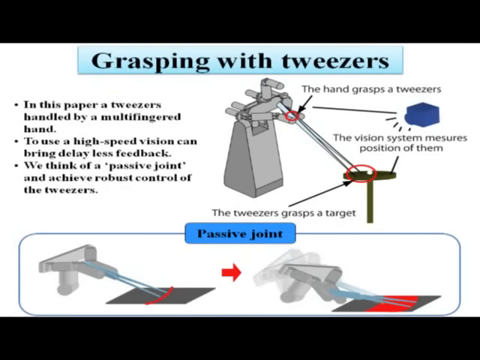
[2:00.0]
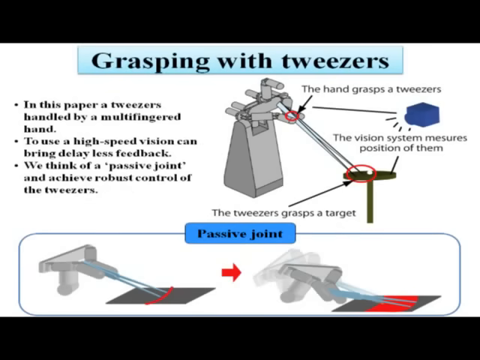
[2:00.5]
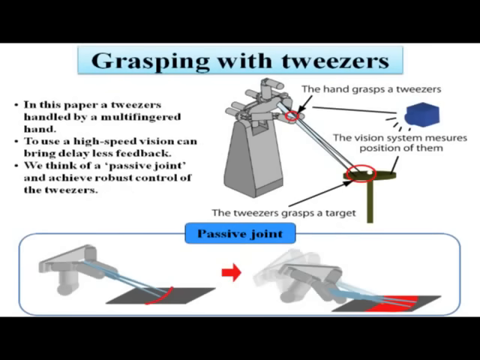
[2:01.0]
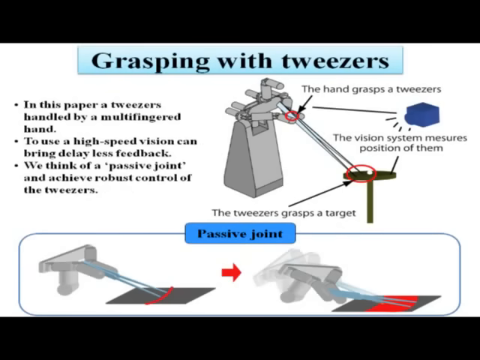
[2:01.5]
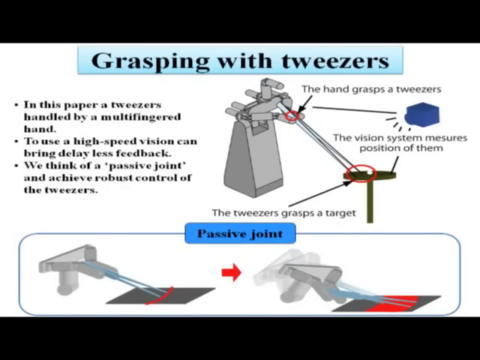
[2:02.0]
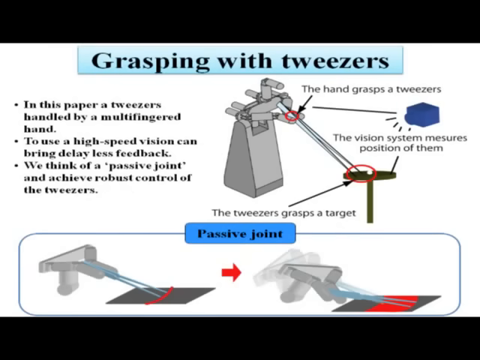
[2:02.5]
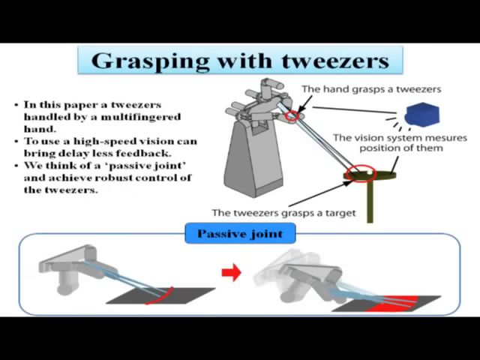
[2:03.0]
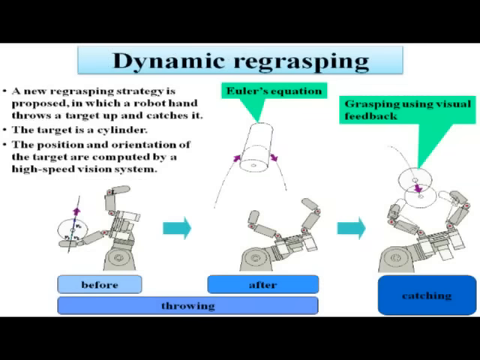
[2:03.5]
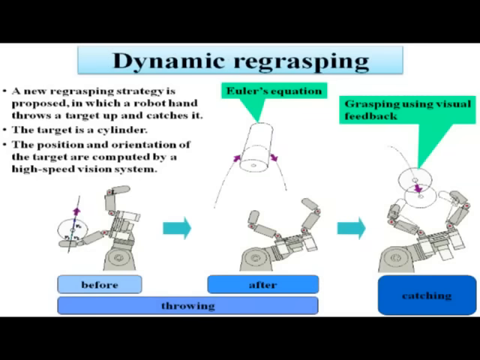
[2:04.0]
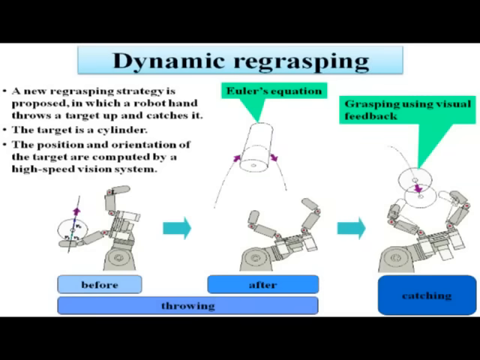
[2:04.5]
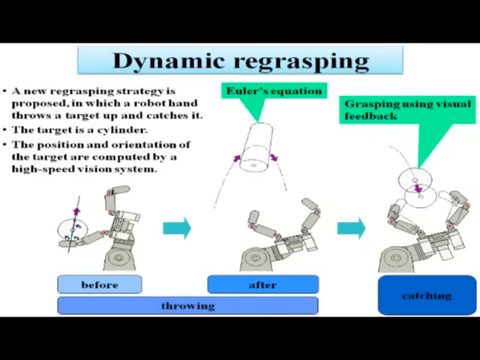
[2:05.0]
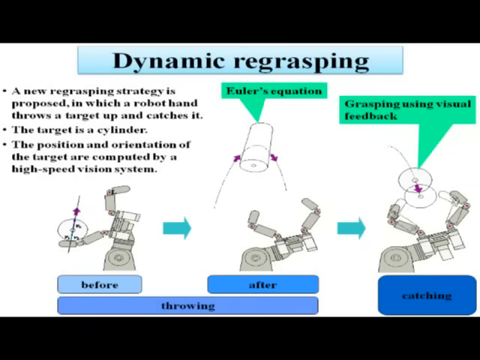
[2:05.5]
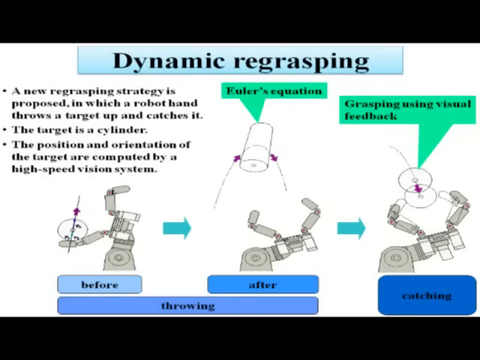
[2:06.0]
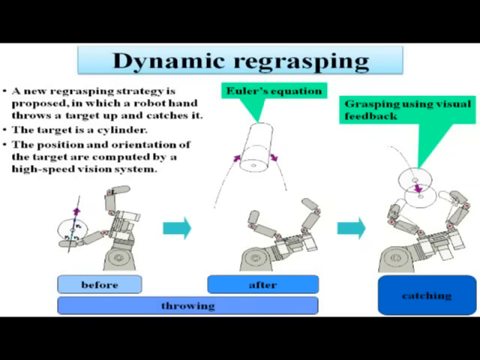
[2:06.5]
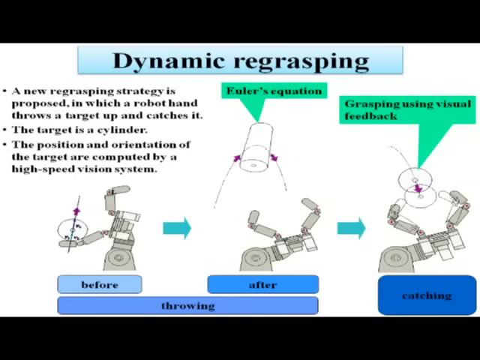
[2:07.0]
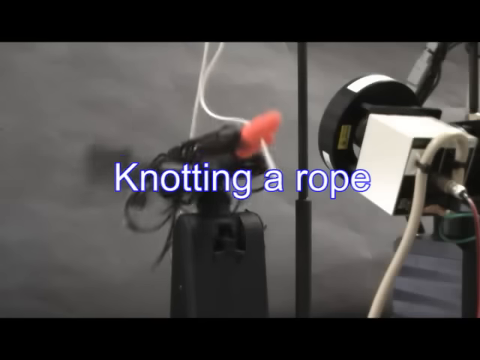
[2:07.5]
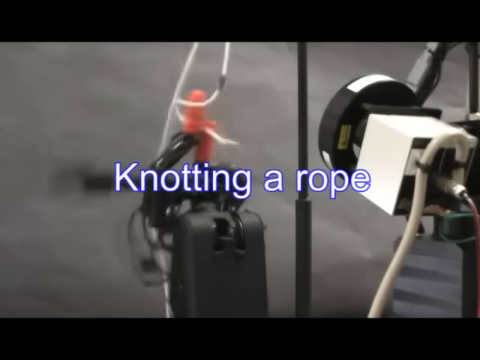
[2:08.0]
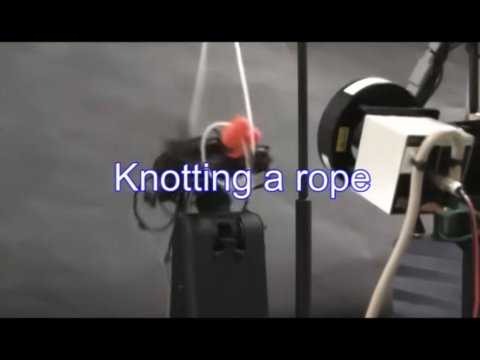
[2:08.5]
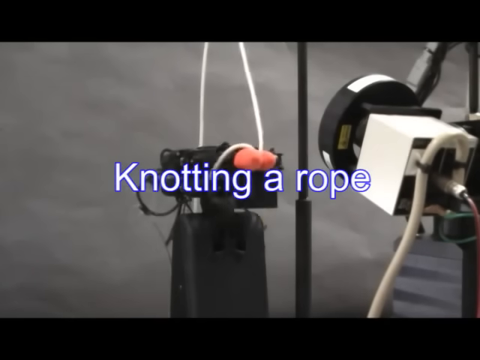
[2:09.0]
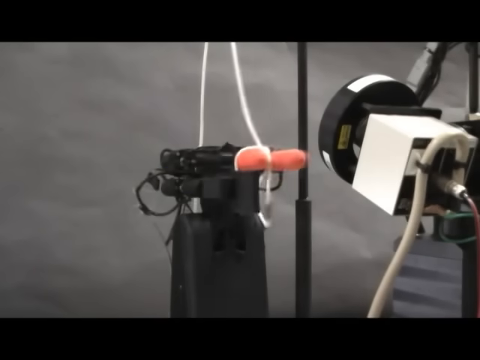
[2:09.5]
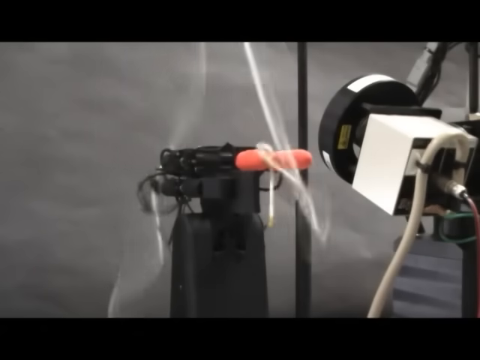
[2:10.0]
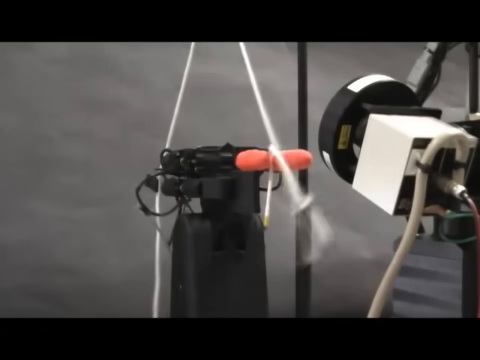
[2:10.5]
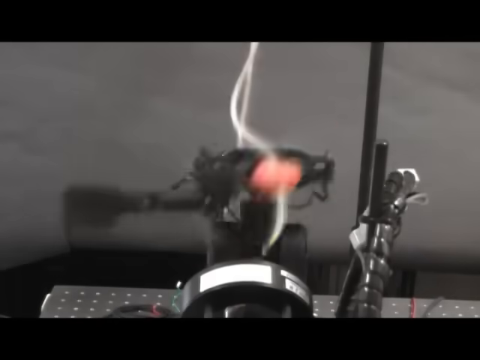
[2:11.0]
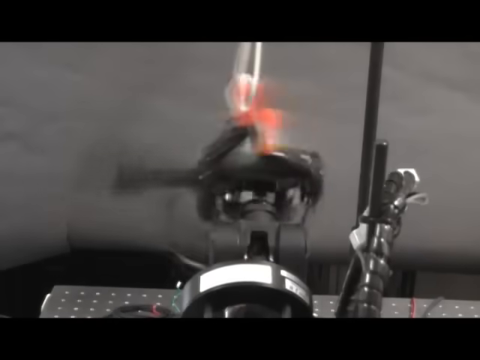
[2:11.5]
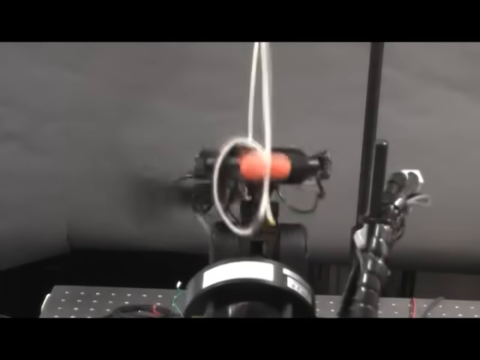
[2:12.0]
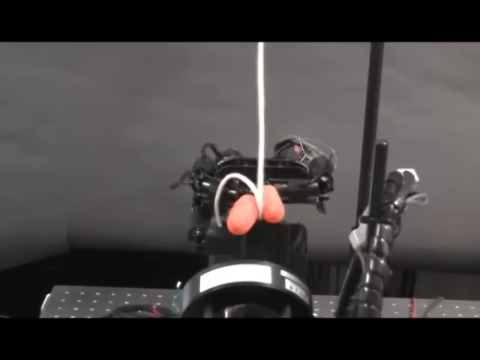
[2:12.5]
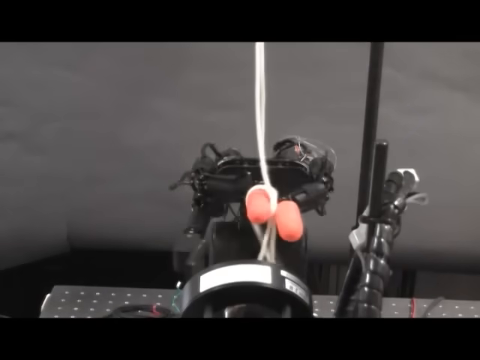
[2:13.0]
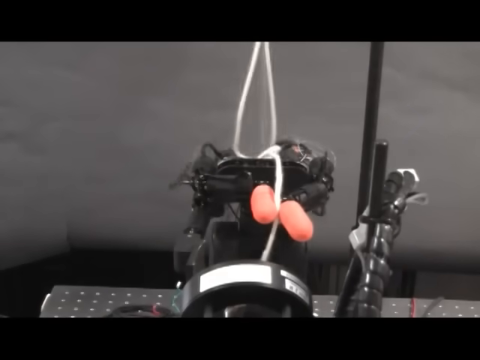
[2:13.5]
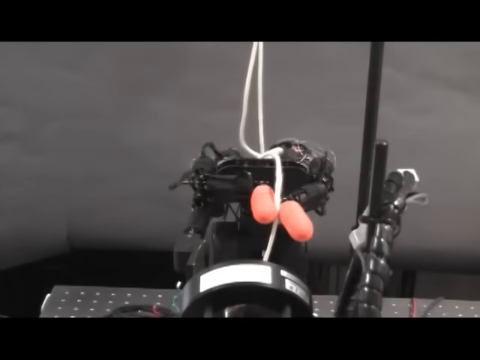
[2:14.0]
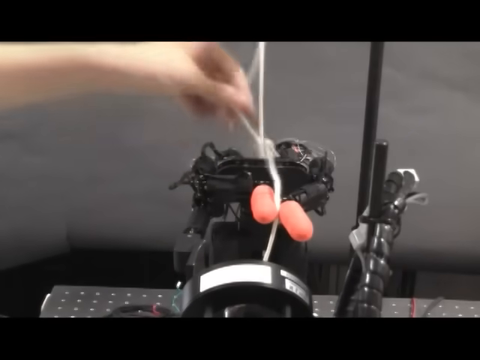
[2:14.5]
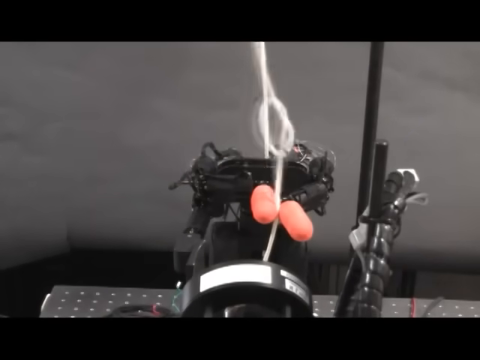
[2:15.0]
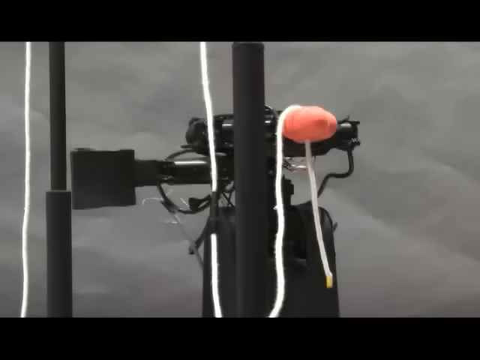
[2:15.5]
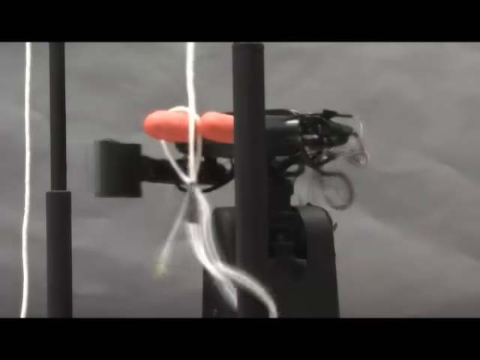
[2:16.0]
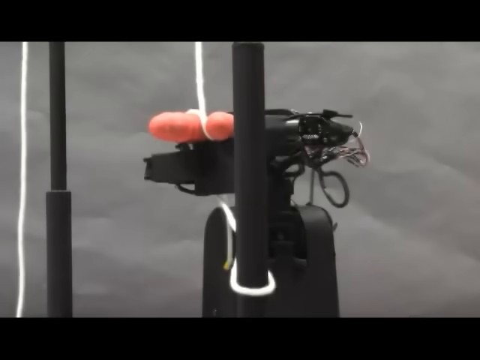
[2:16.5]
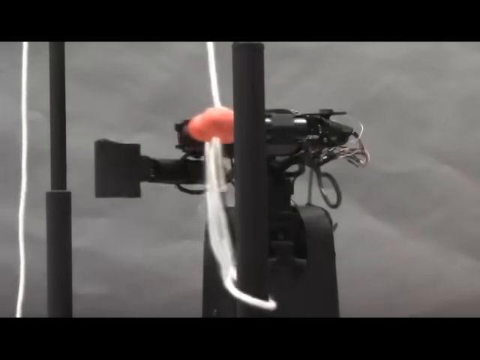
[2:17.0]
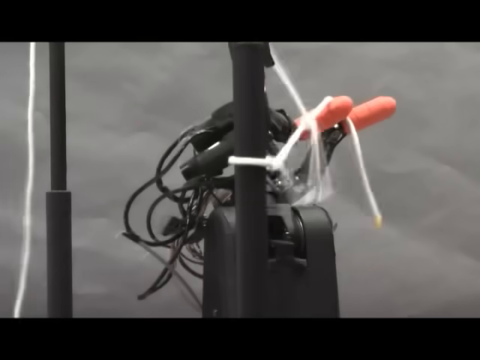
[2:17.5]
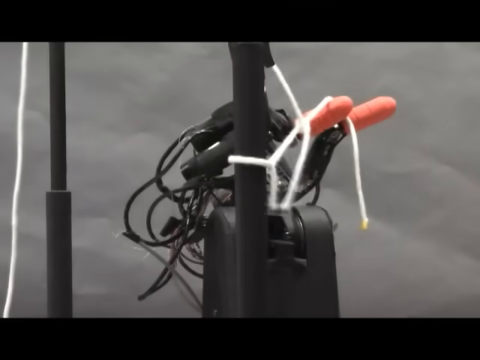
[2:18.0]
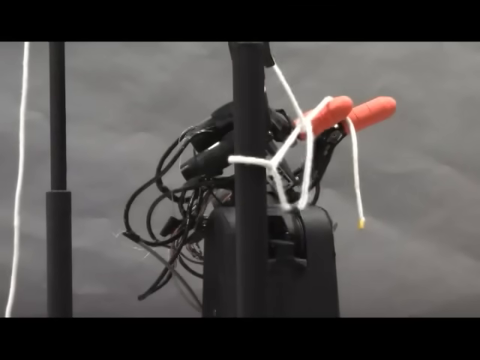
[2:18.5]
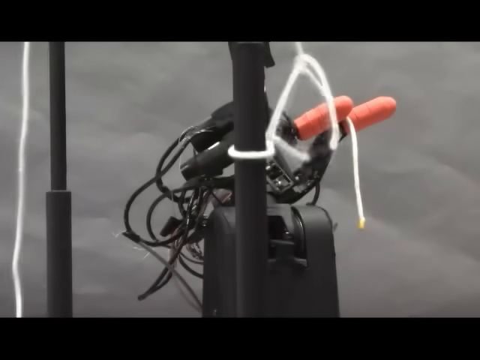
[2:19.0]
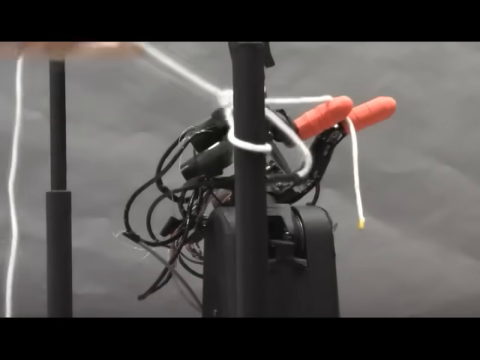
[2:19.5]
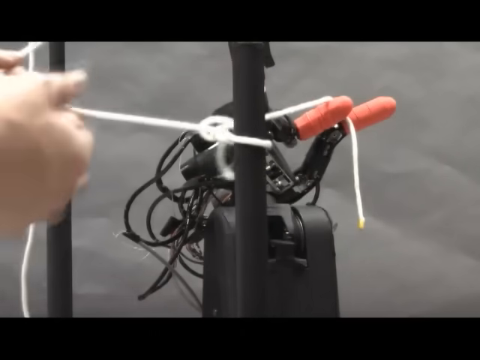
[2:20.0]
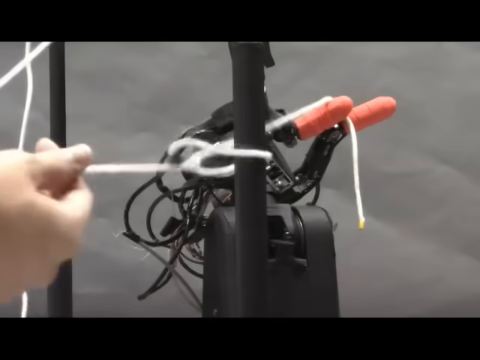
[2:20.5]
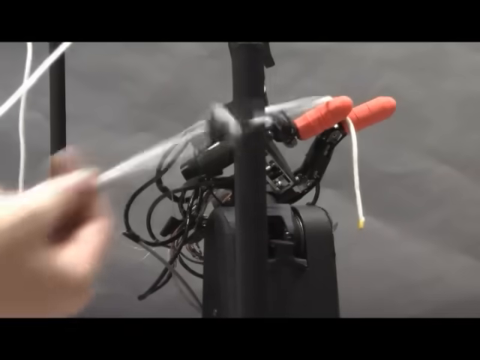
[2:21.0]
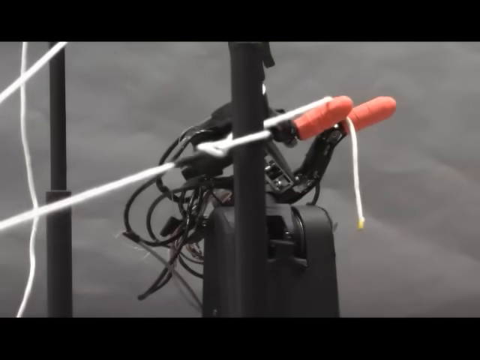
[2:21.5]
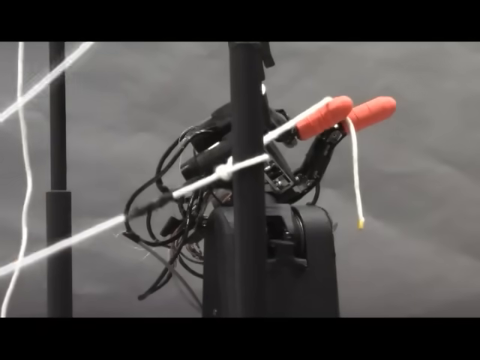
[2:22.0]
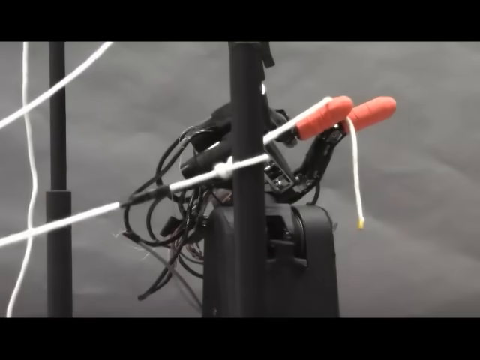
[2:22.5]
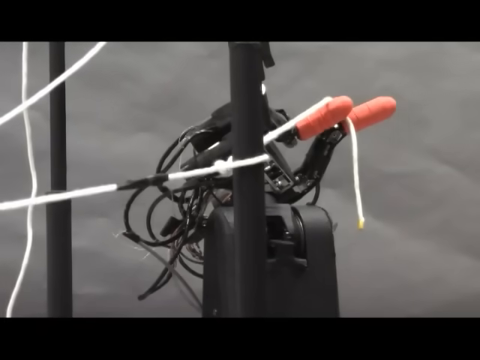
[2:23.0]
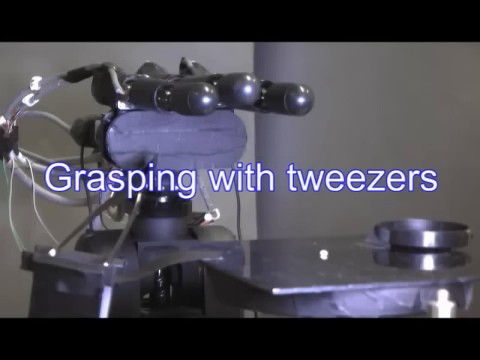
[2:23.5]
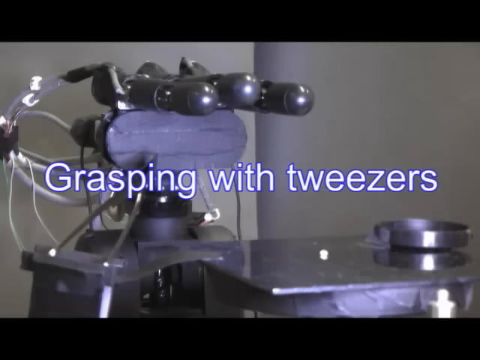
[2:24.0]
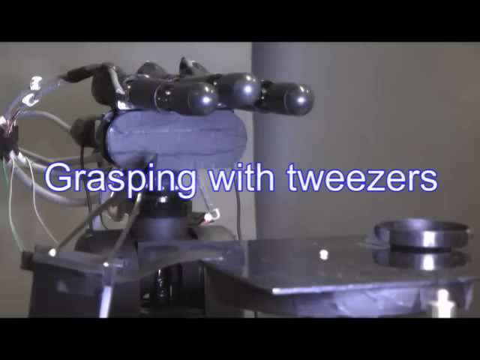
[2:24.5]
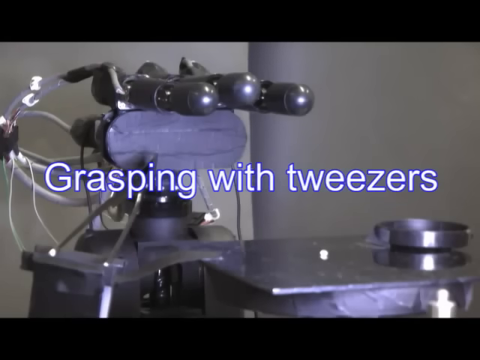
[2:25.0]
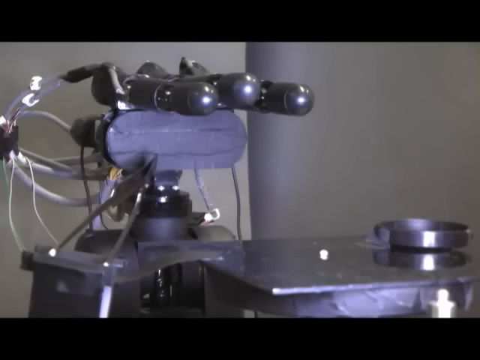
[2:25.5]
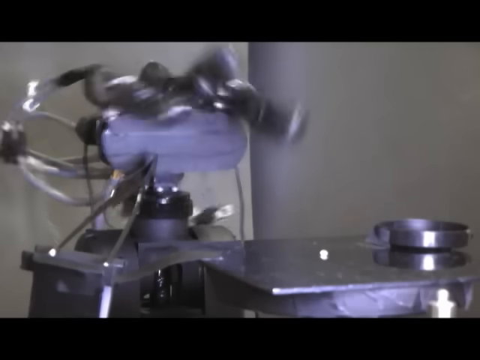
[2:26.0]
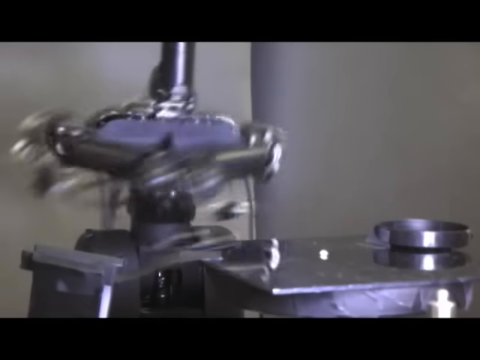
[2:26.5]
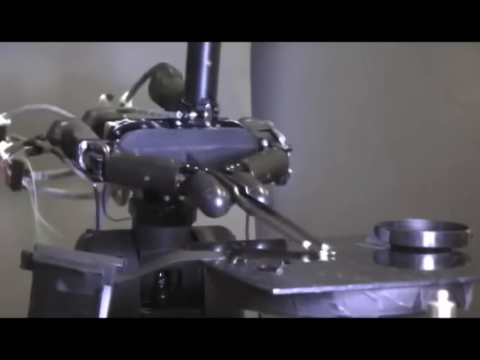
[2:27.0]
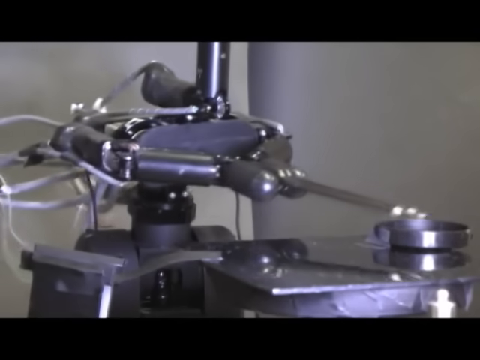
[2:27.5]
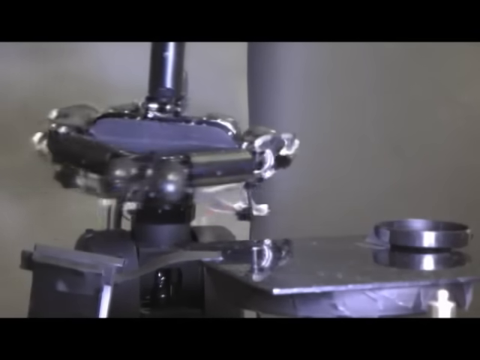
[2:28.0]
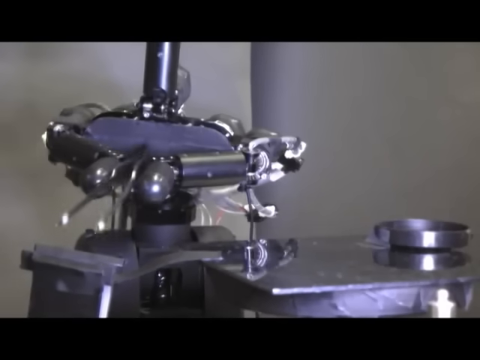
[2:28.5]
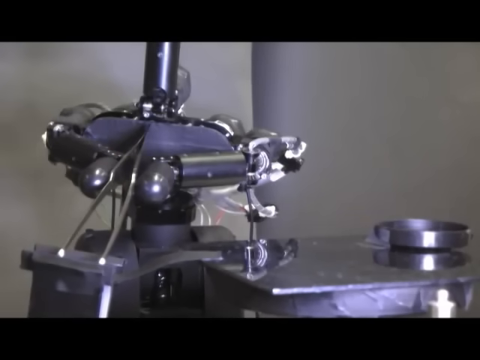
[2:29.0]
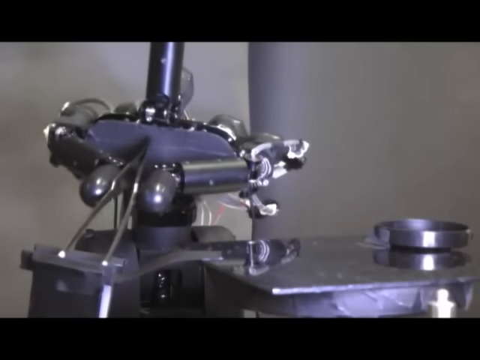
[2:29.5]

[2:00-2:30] The grasping with tweezers slide has its title at the very top in black with a light blue background behind it, some text describing the process, and two graphics showing what the robotic arm does and how it operates. The next slide reads "dynamic re-grasping", in the same PowerPoint format with text at the top left, and the bottom portion shows an illustration of what dynamic re-grasping is for the robot and kind of what the end outcome will be. Real-life footage then shows the robot knotting a rope. A title in the middle reads "knotting a rope" in white lettering with a blue background or blue outlines, and the robot takes a white piece of rope that is hanging down and uses its two orange-tipped fingers to tie a possible knot in it. At one point someone's hand comes into the scene, showing that somebody is present. Next the grasping with tweezers footage shows a robot holding tweezers and picking up something on the right side.